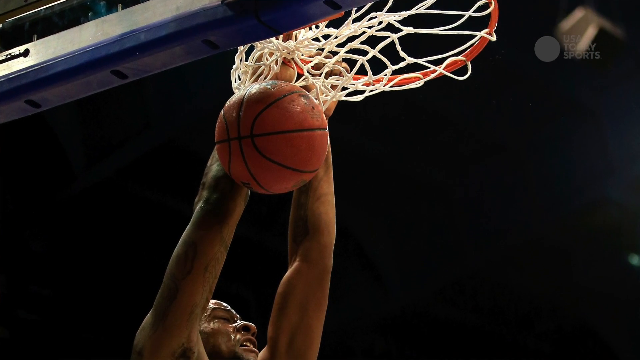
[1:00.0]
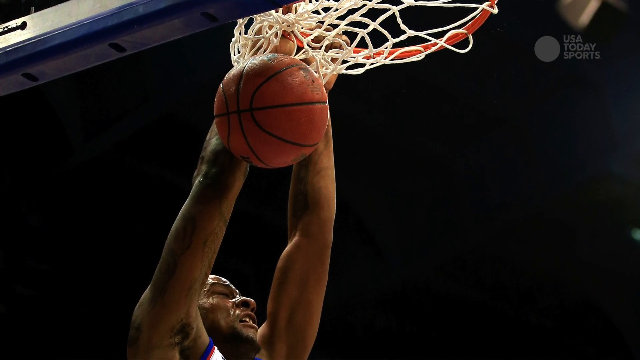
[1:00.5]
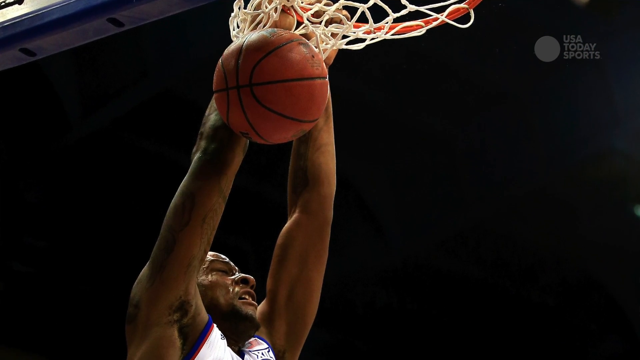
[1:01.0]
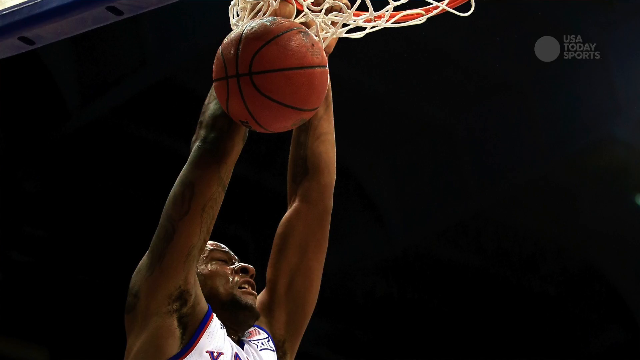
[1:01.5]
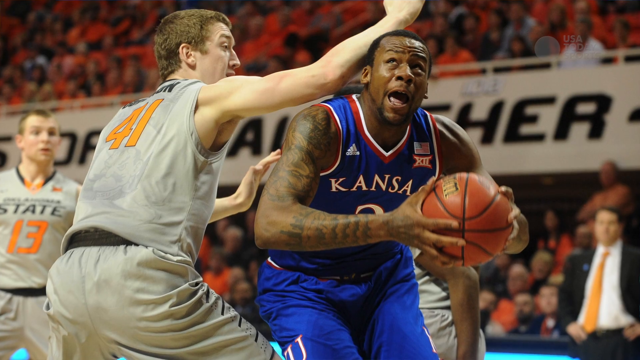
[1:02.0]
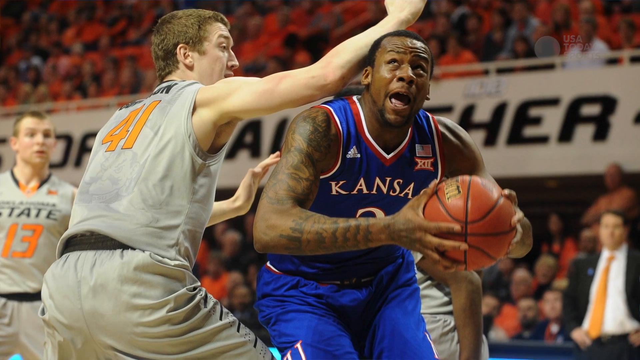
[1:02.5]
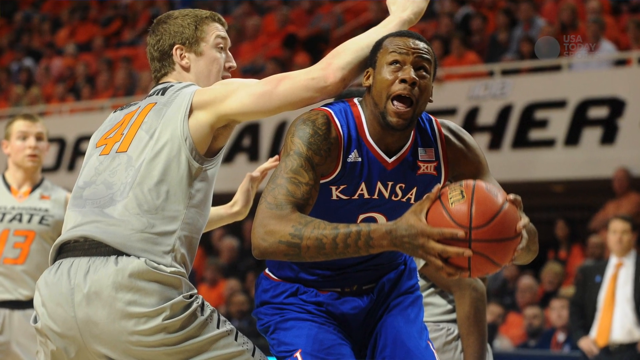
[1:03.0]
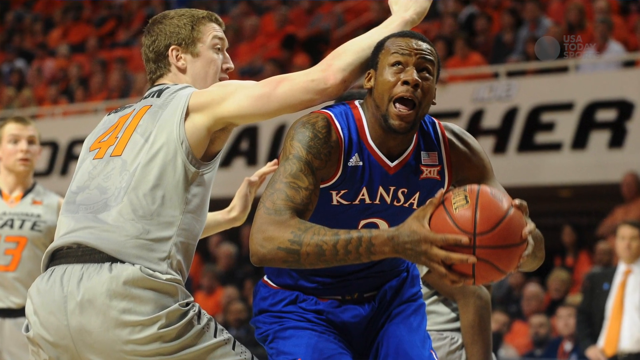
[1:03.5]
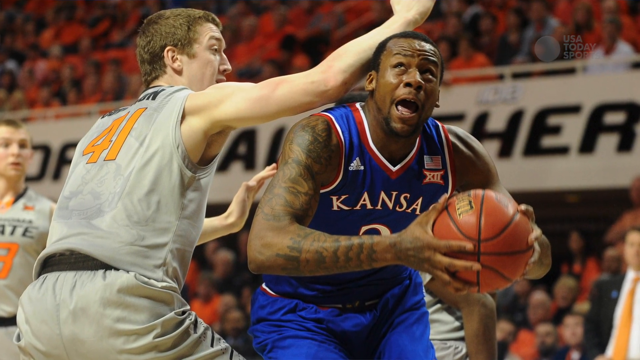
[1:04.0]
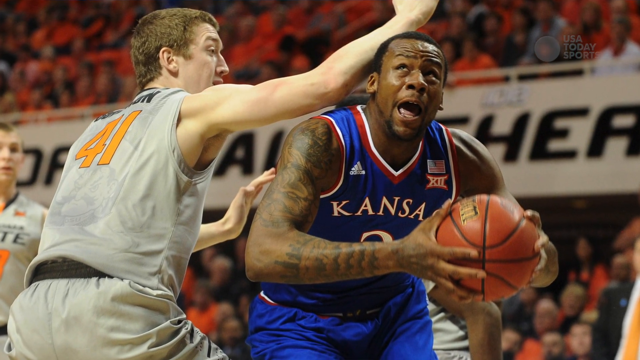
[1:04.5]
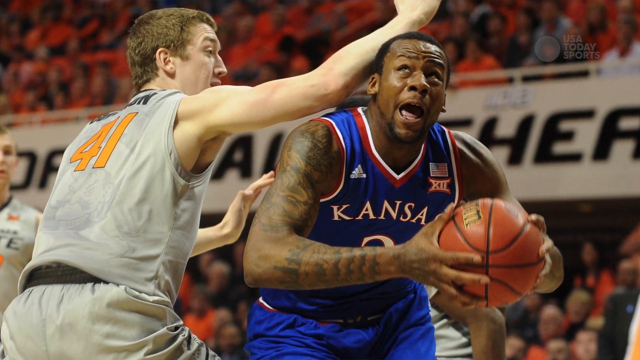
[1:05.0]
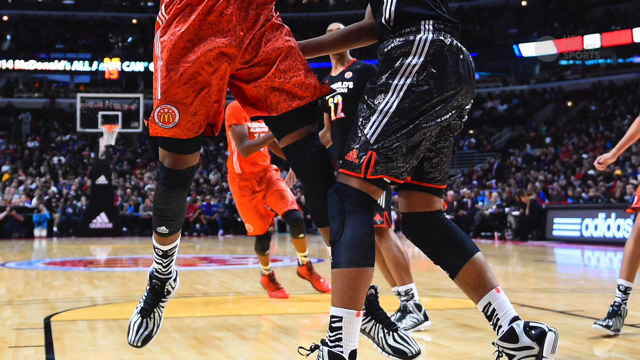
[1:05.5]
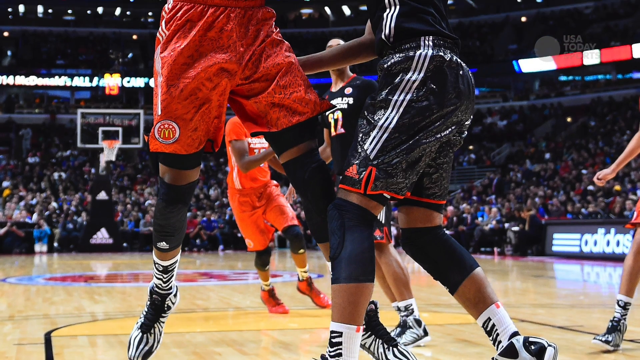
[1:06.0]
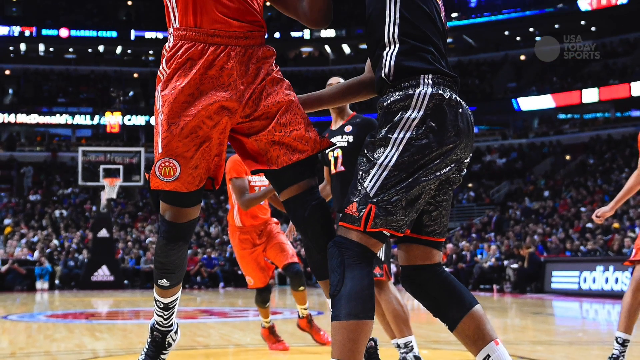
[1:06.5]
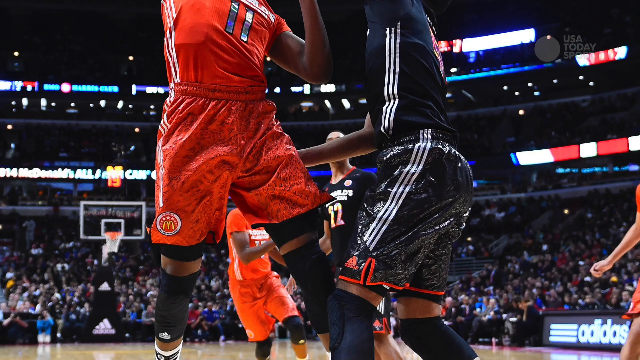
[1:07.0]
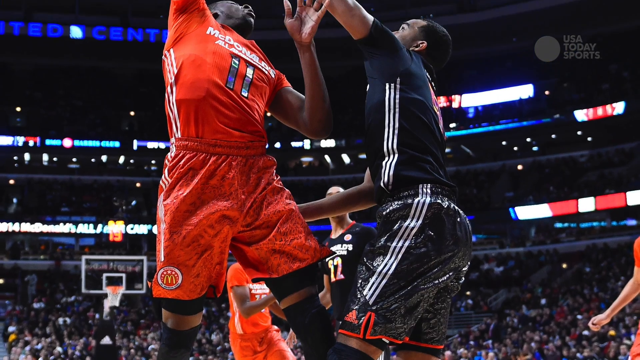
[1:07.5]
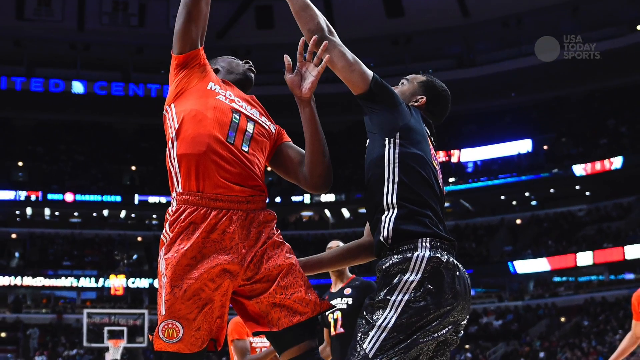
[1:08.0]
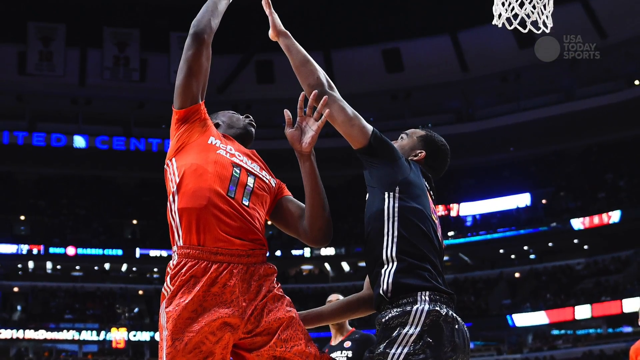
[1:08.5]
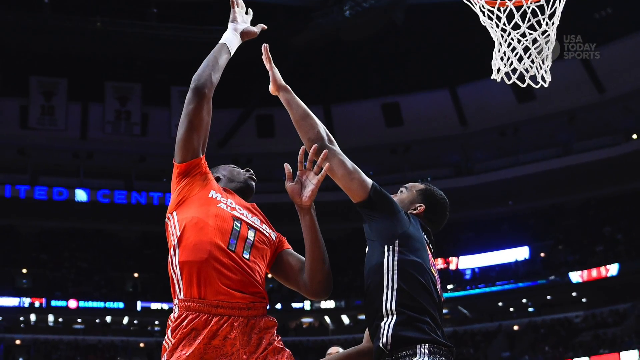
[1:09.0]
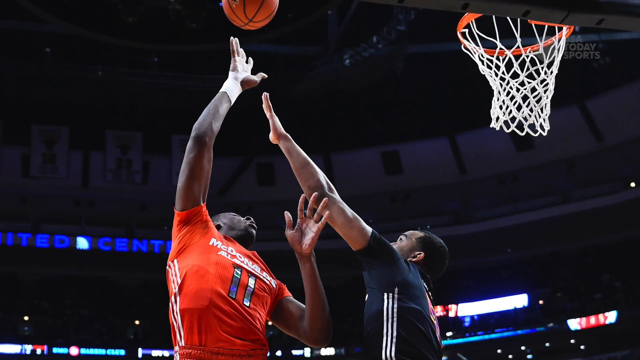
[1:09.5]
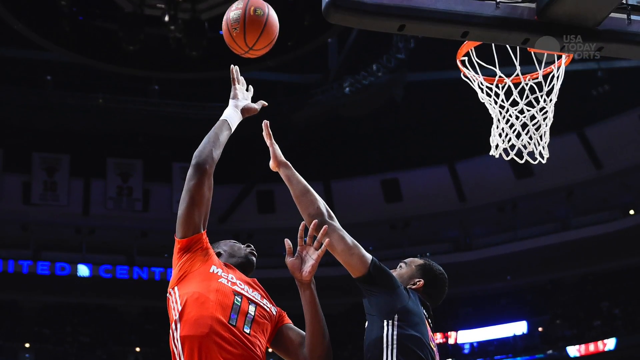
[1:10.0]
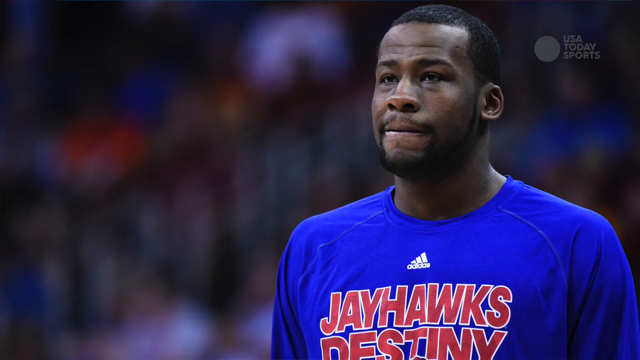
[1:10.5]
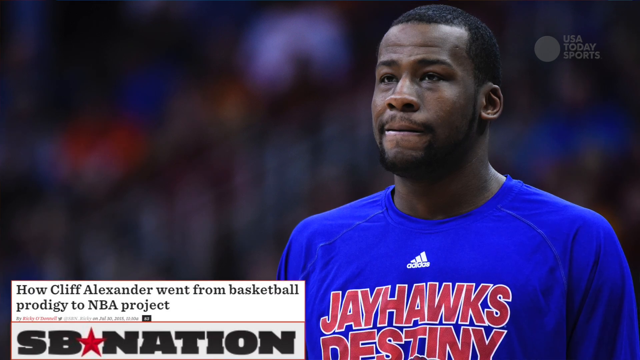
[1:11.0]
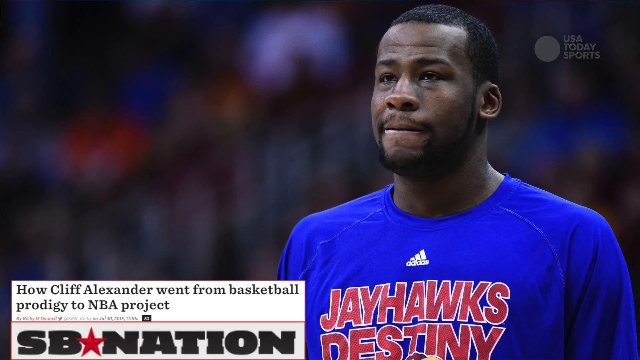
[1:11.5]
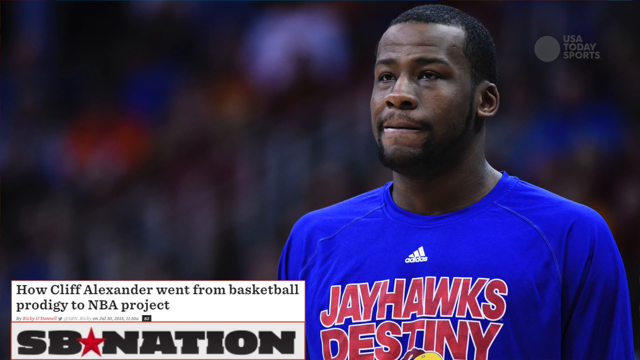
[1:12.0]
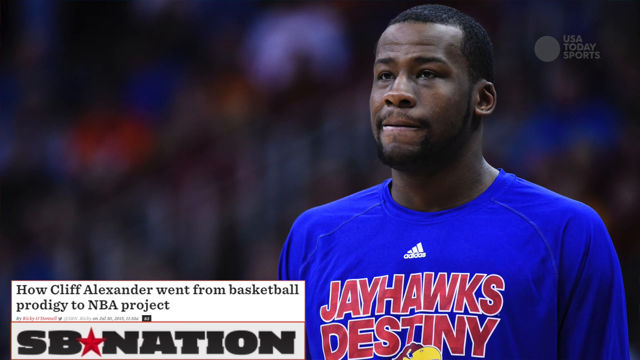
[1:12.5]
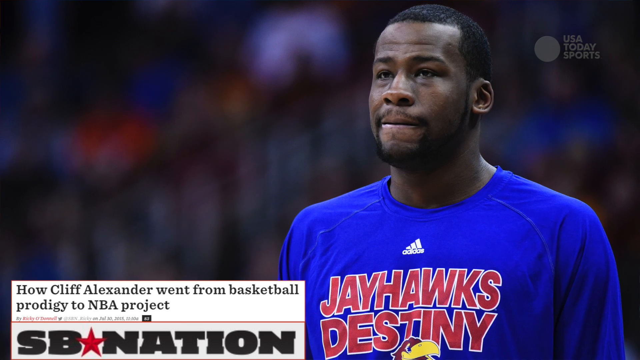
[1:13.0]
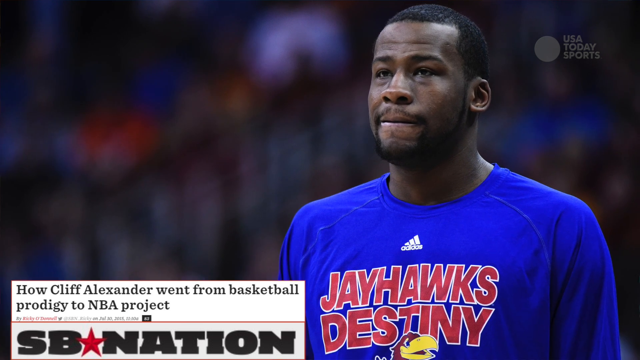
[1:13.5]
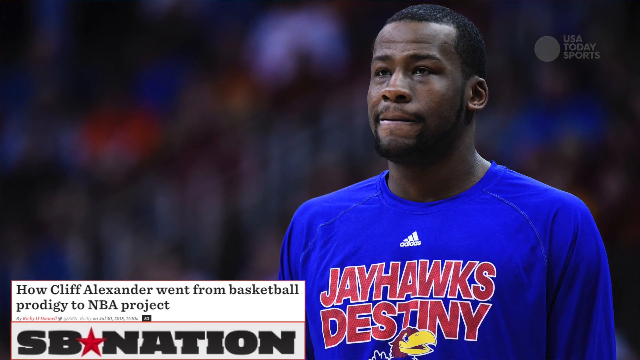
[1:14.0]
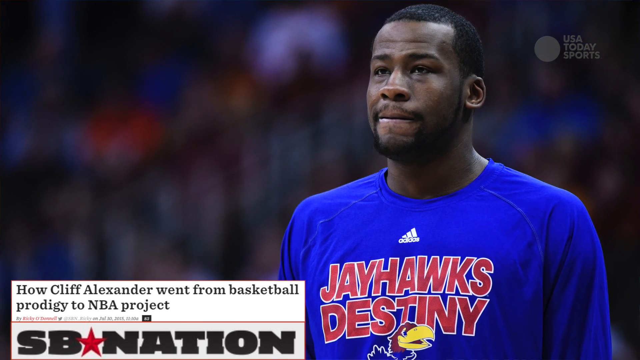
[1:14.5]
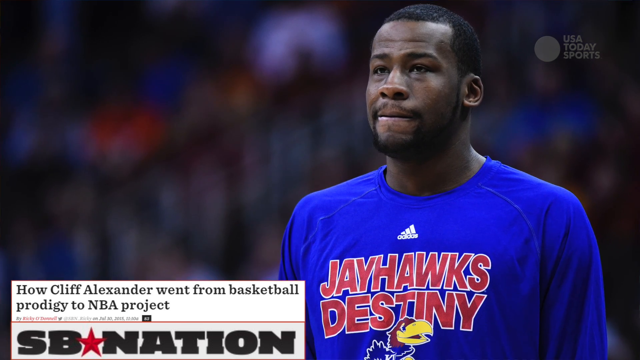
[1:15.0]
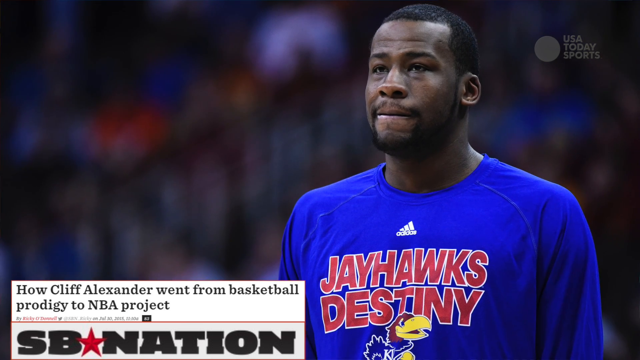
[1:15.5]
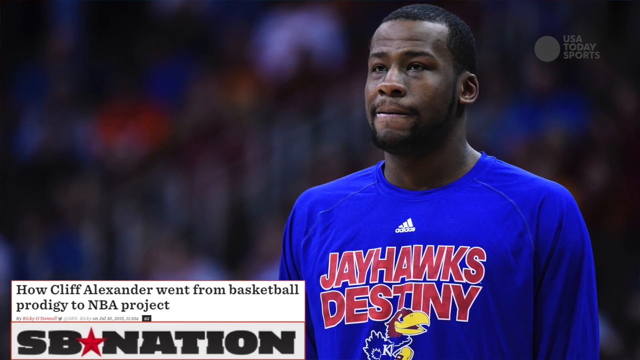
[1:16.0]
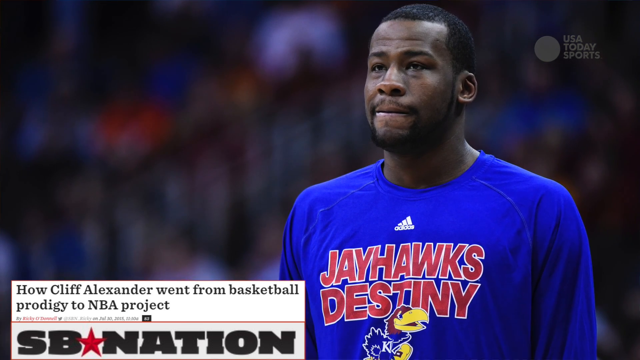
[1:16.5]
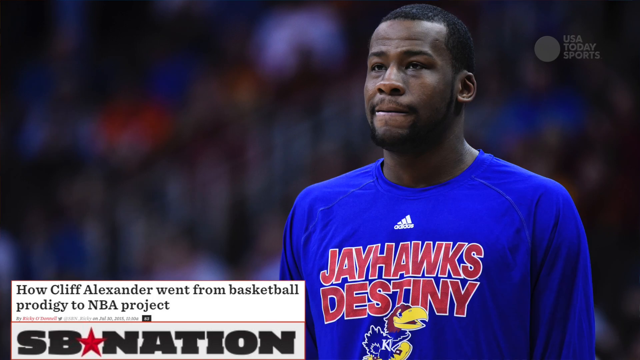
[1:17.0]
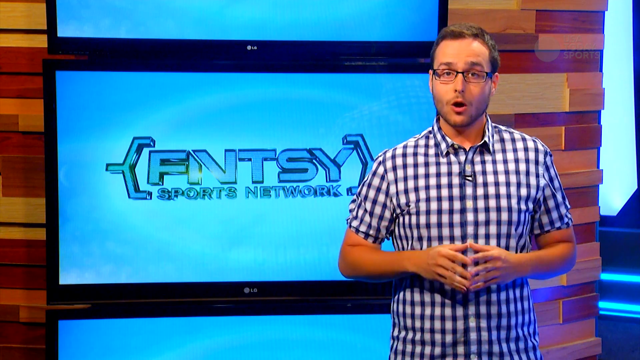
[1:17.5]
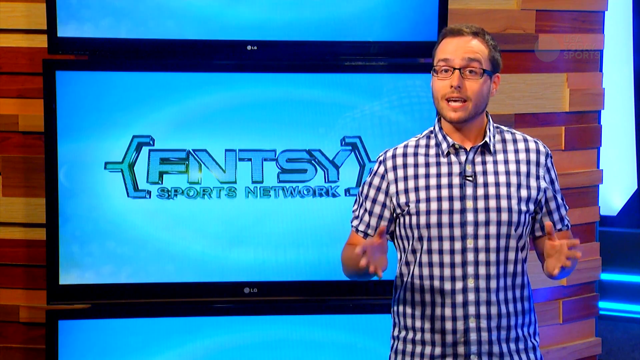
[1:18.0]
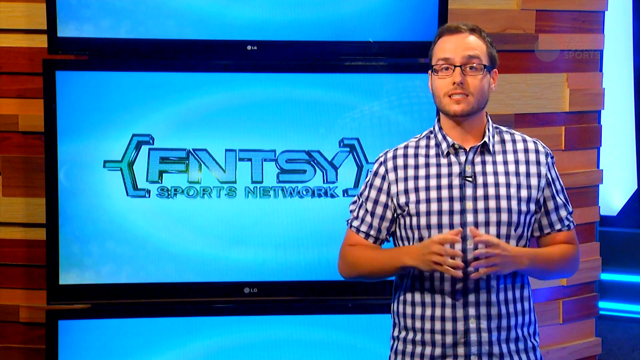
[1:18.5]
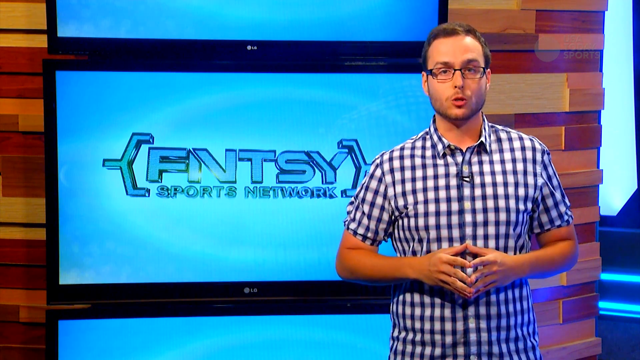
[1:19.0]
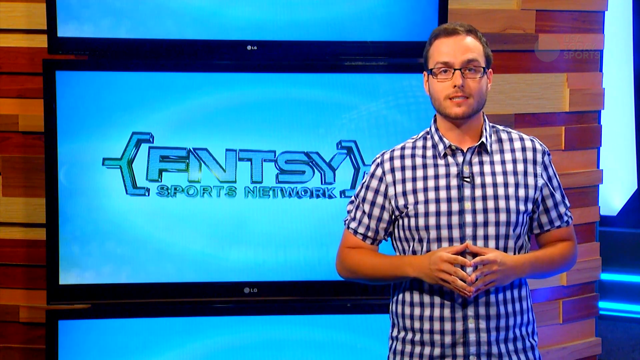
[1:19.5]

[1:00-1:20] A basketball goes through a net. Two basketball players appear: one from Kansas, dressed in blue, holds the basketball, while a white player in a white uniform, number 41, goes after him with his hand on the back of his head and neck. In a jump shot, two people reach for the ball, which at first is out of view and then appears. A player wears an Adidas "Jayhawks Destiny" blue shirt. The video returns to the sportscaster, who moves his hands with every word.